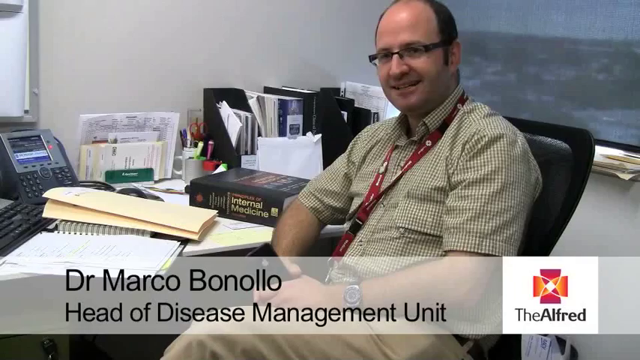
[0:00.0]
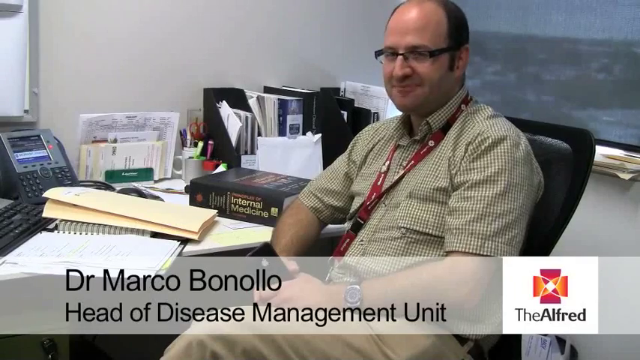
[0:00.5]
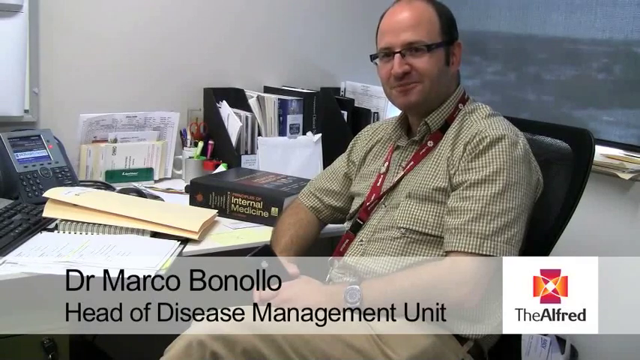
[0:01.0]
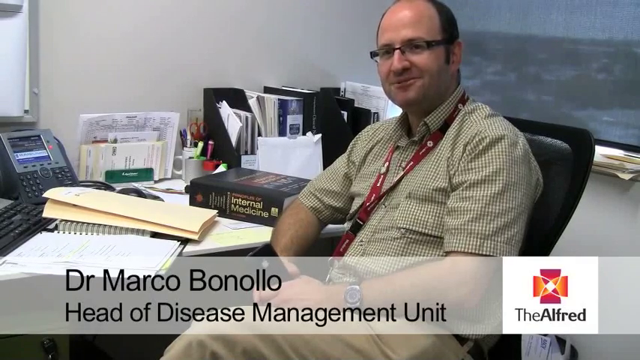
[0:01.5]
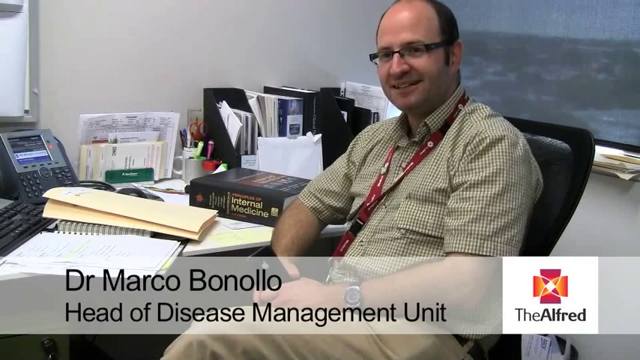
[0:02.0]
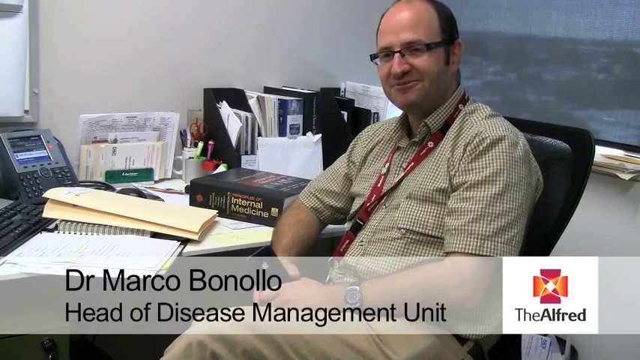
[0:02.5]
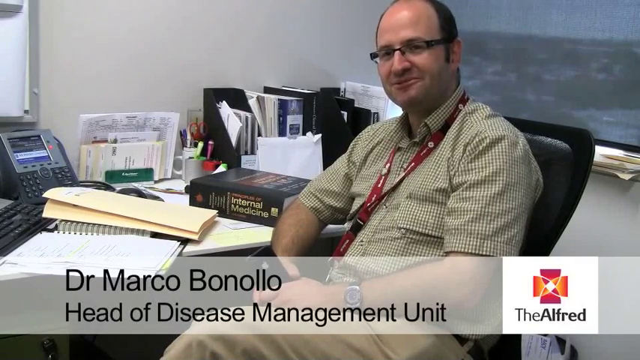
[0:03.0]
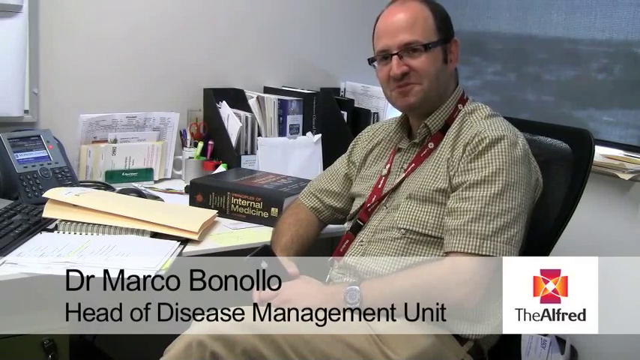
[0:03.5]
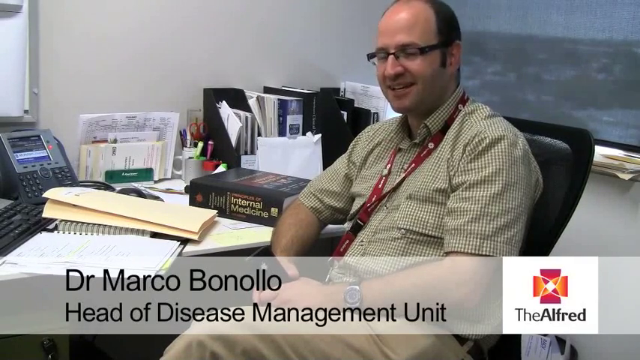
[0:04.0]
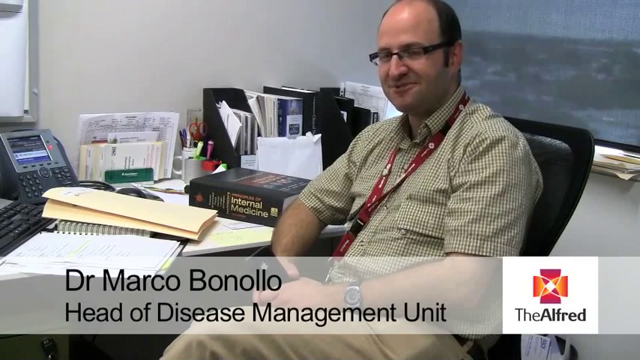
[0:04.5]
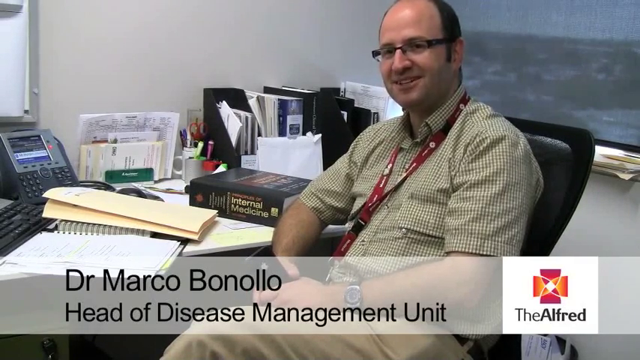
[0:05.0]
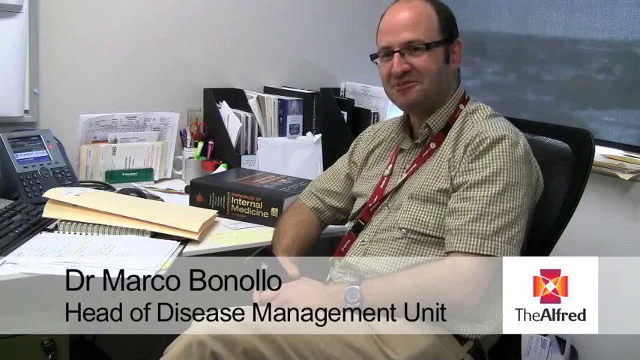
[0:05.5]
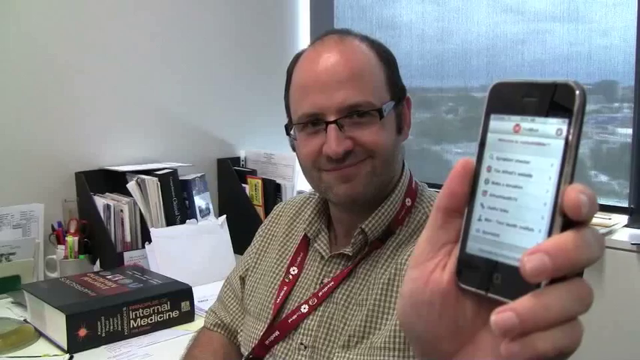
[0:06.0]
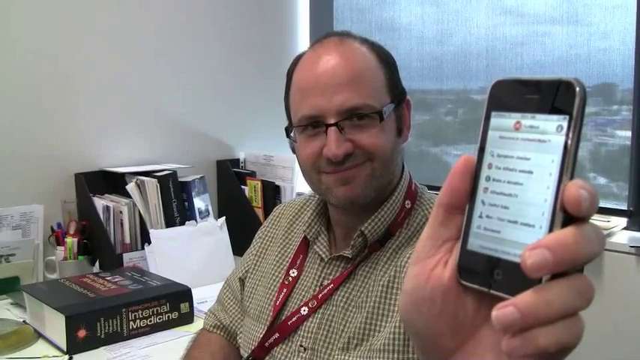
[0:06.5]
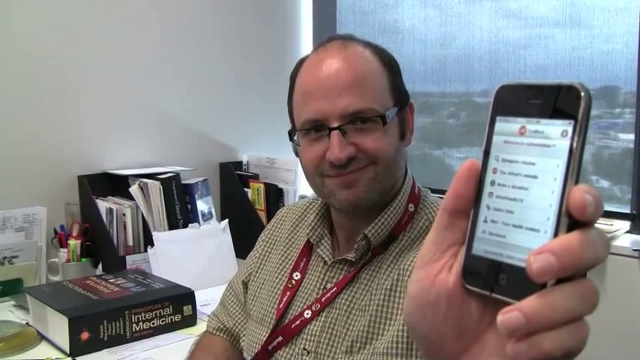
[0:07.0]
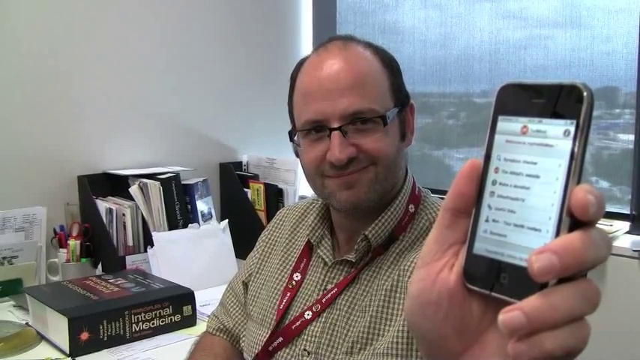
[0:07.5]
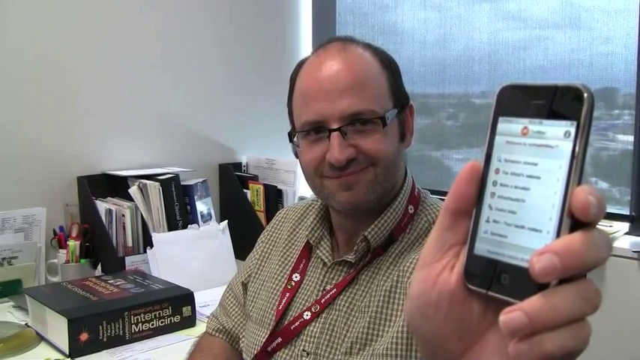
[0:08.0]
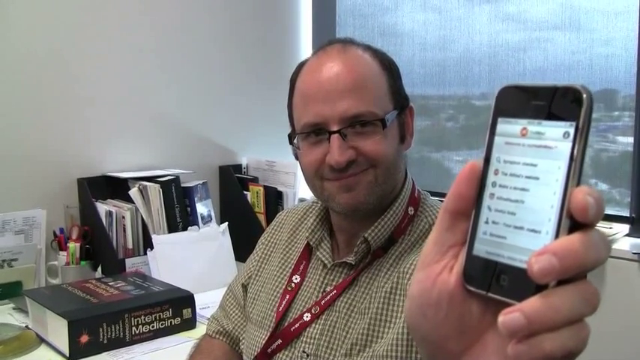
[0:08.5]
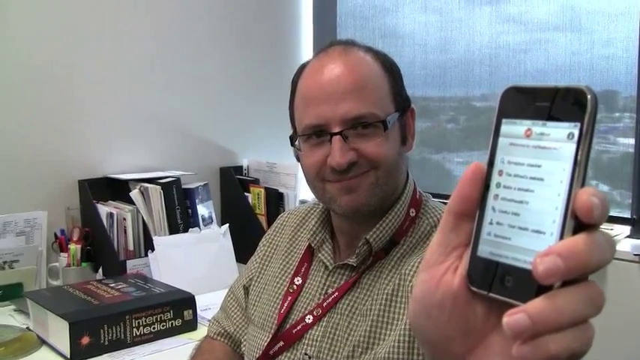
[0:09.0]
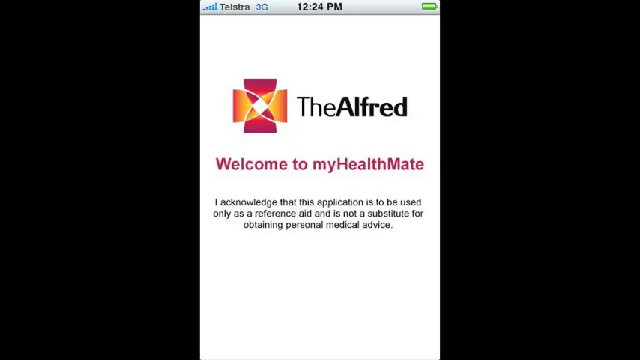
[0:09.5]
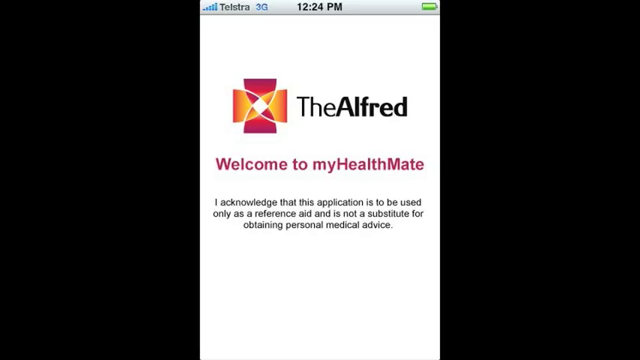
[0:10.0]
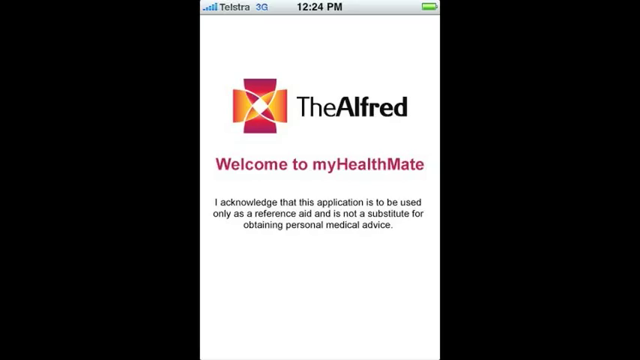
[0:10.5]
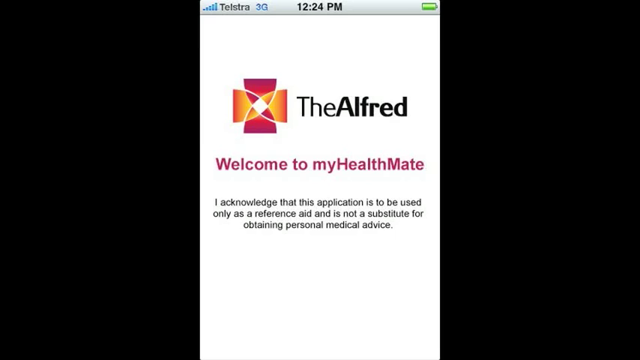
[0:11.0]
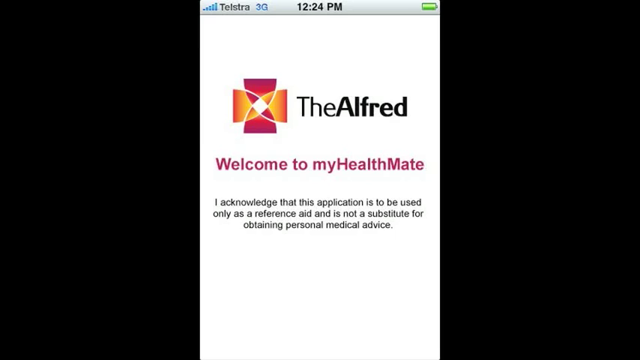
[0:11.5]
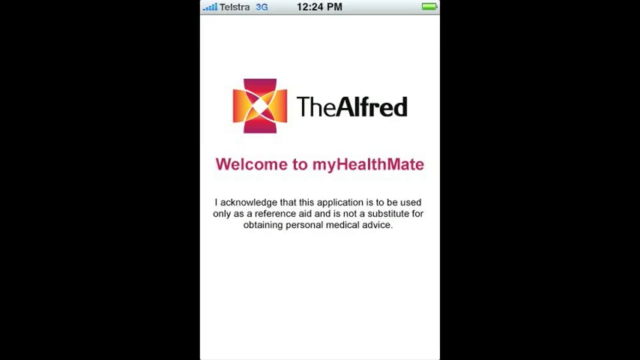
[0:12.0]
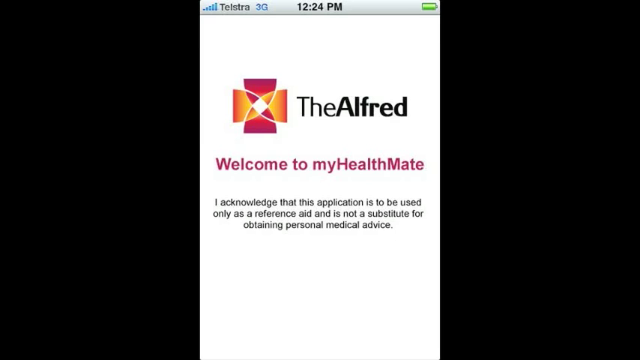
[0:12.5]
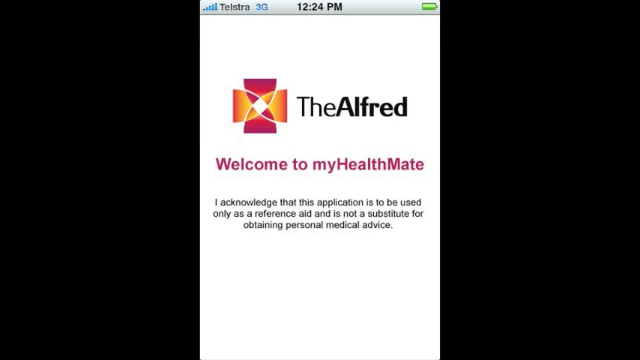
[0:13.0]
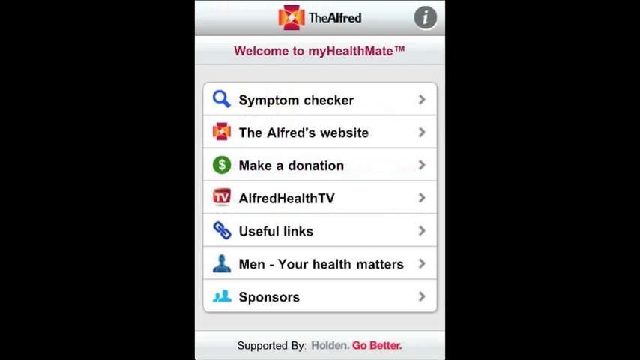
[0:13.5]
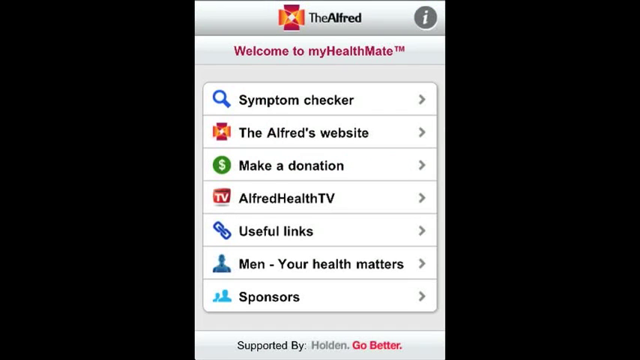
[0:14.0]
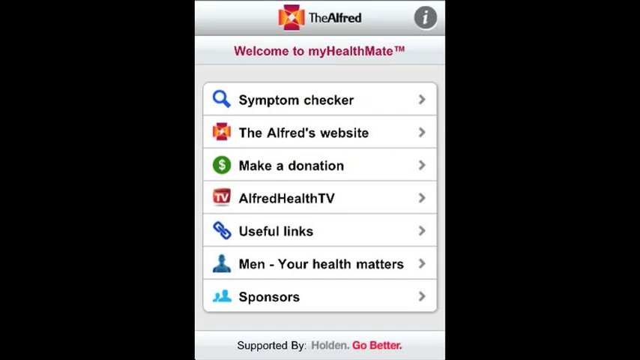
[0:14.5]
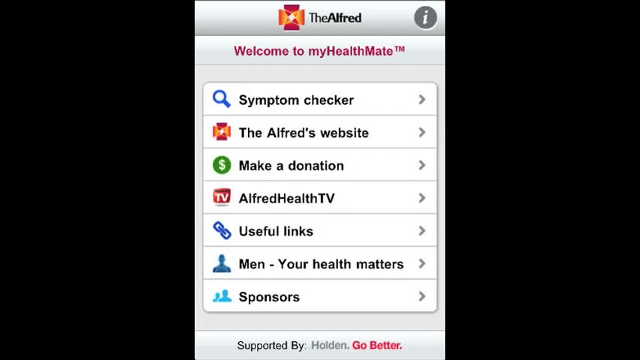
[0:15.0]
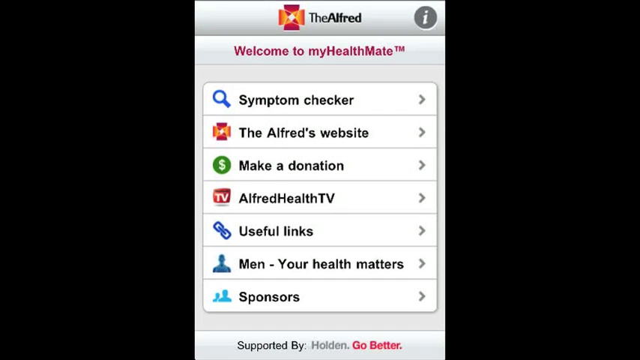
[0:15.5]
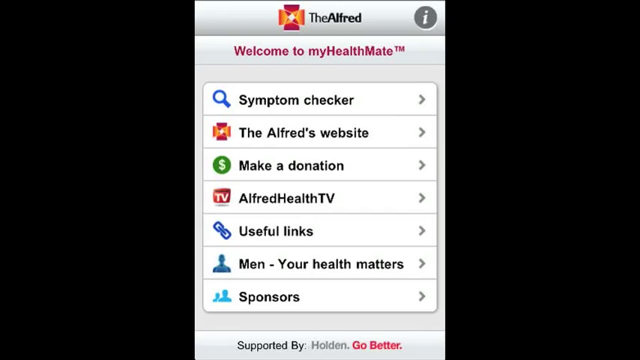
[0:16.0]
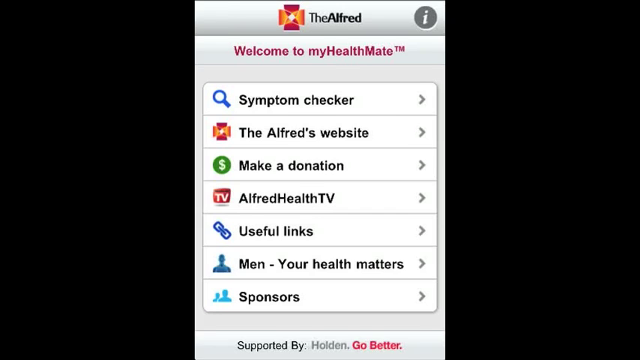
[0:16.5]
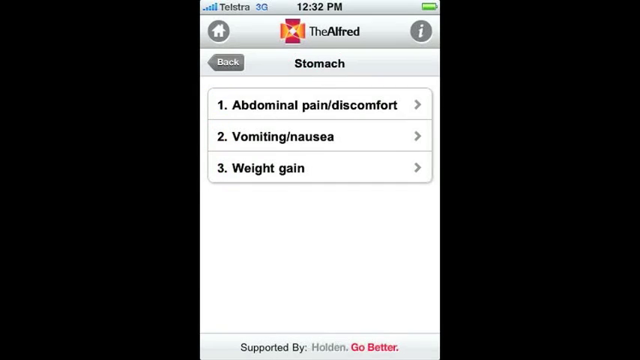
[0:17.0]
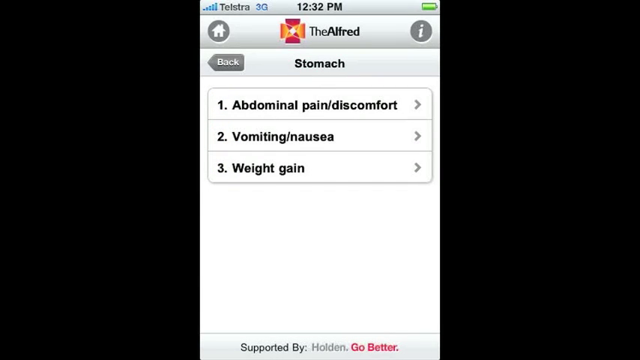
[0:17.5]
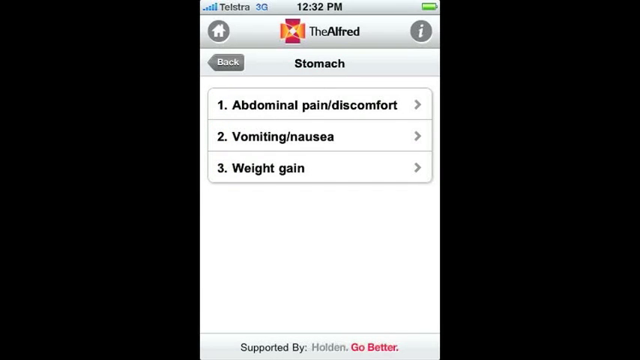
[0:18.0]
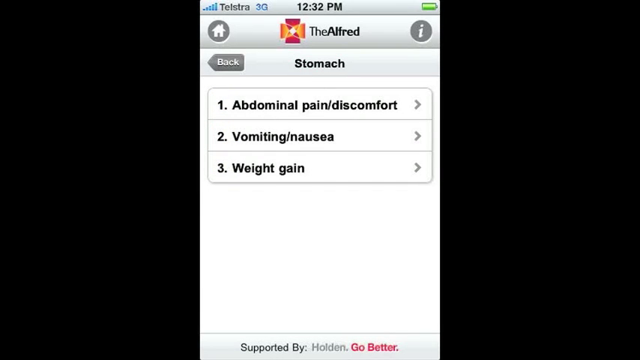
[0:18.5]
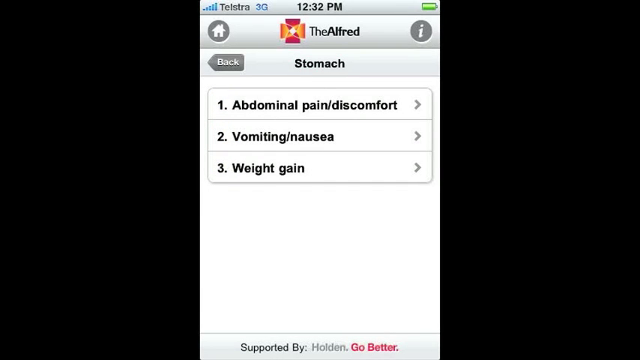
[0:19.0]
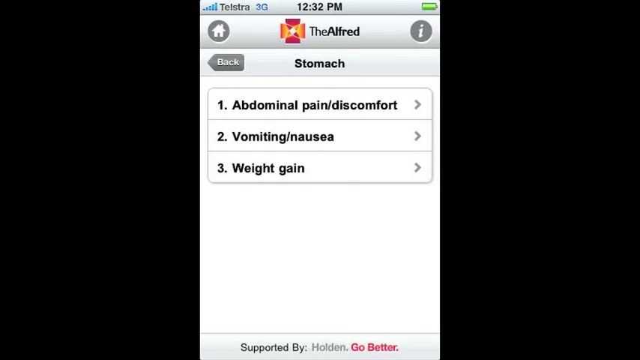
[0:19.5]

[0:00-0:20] A man sits in a chair on the right-hand side of the frame. He has a white skin tone, is balding with dark hair on the sides of his head, and wears black-framed glasses, a white and green checkered shirt, and a red lanyard around his neck. He holds a black iPhone in his left hand. In front of him, on the left side of the frame, is a desk with a telephone, some books, binders and papers. At the bottom of the frame, a transparent white rectangle shows his name, "Dr. Marco Bonollo", and underneath it, "Head of Disease Management Unit". He talks to the camera and grips his phone very hard. The scene changes: he holds his phone in his left hand and lifts it up to the camera, smiling, his hands slightly shaking. The scene then changes to a mobile phone webpage with a white background showing the brand name, the Alfred, and underneath it, in red, "Welcome to My Health Mate". The page then changes to a sort of category choice system with seven categories, which from top to bottom read "Symptom Checker", "the Alfred's website", "Make a Donation", "Alfred Health TV", "Useful Links", "Men, Your Health Matters", and, at the very bottom, "Sponsors".